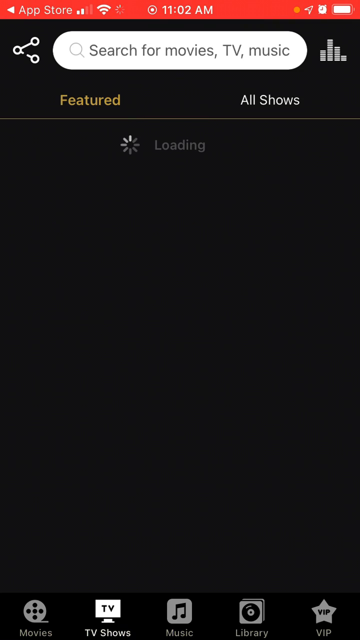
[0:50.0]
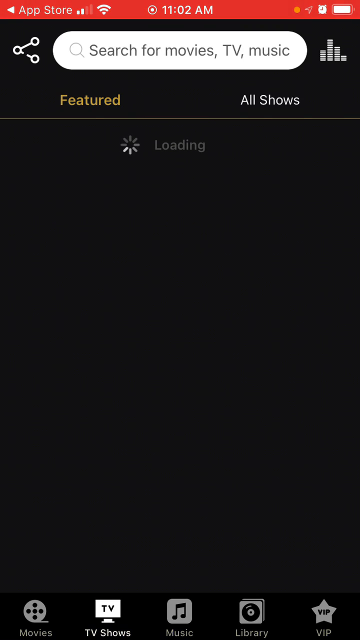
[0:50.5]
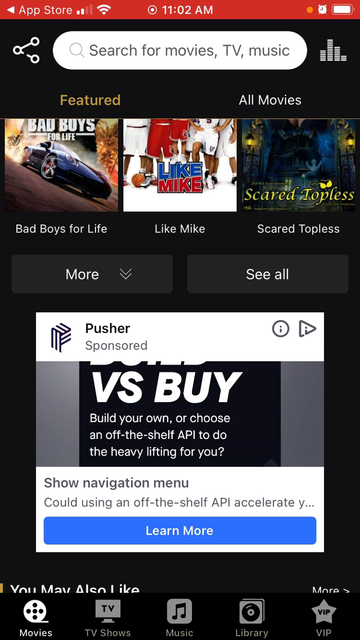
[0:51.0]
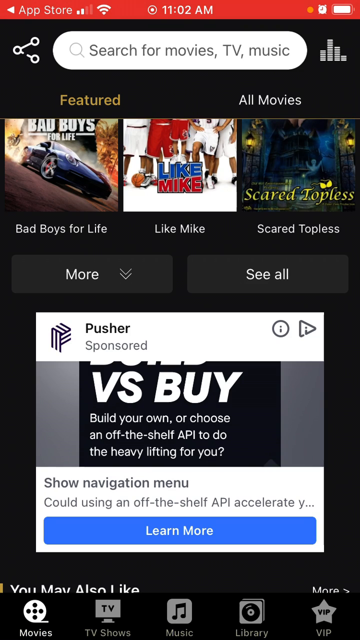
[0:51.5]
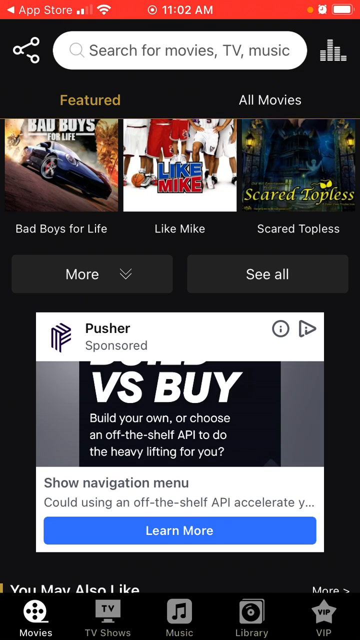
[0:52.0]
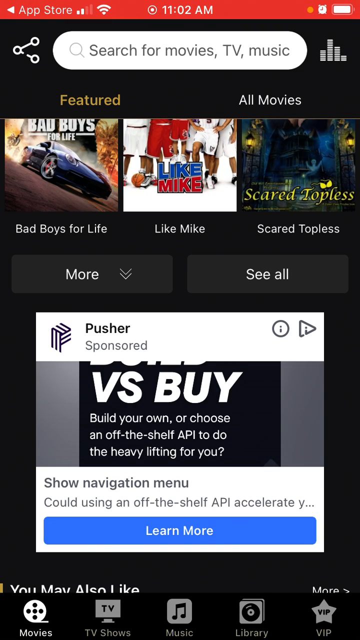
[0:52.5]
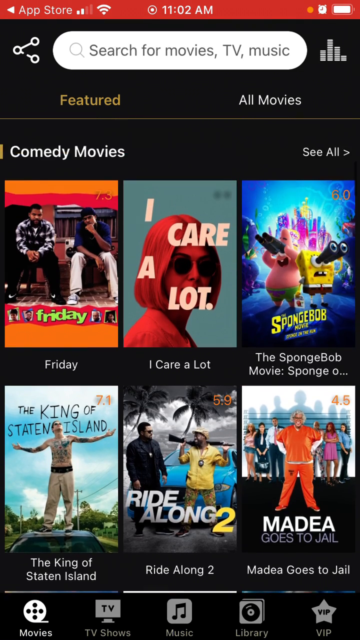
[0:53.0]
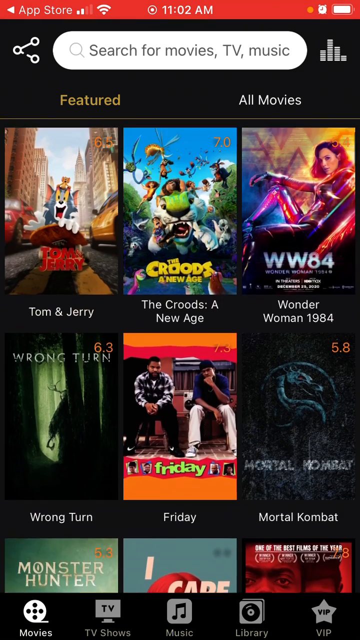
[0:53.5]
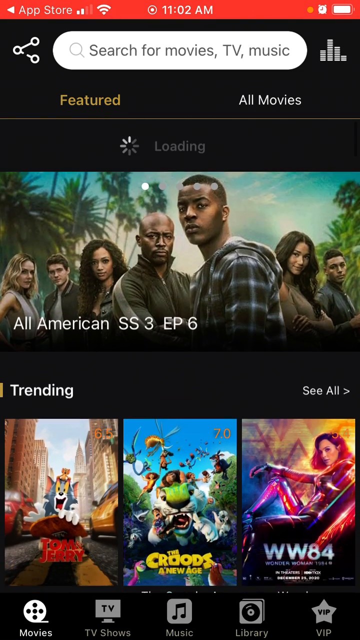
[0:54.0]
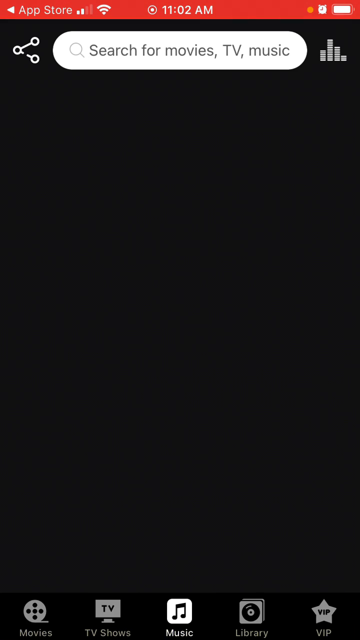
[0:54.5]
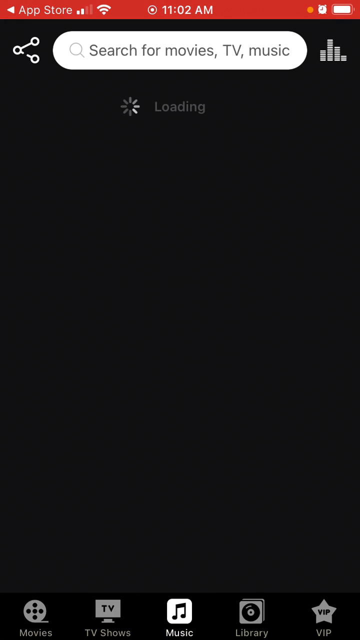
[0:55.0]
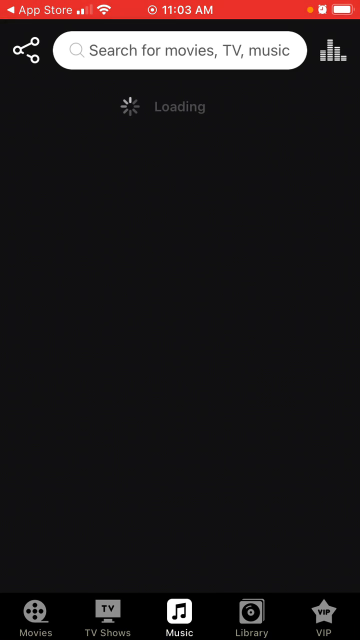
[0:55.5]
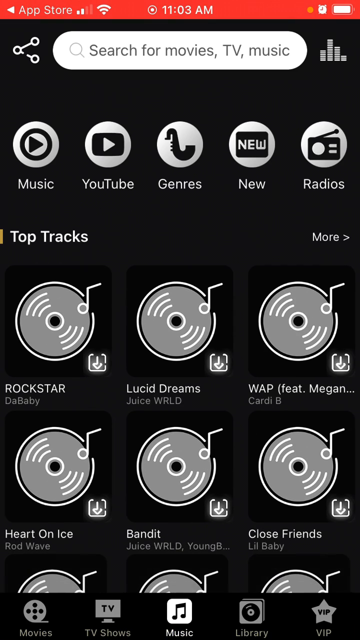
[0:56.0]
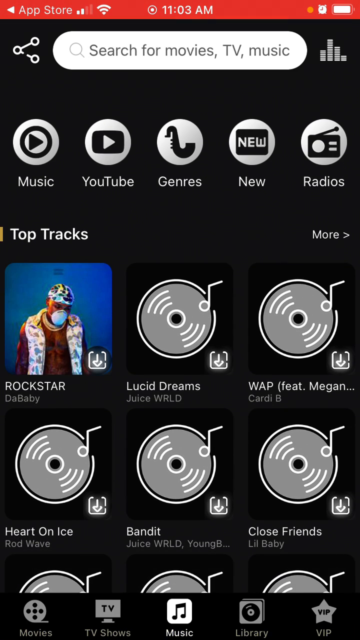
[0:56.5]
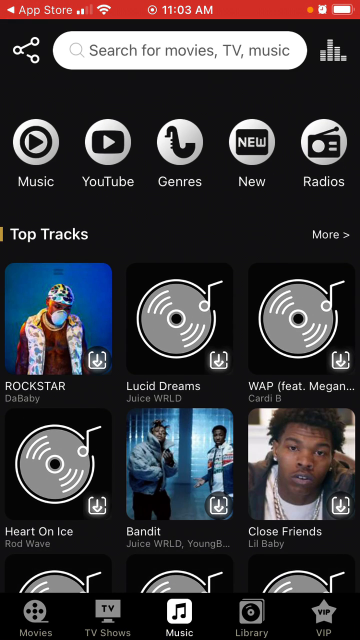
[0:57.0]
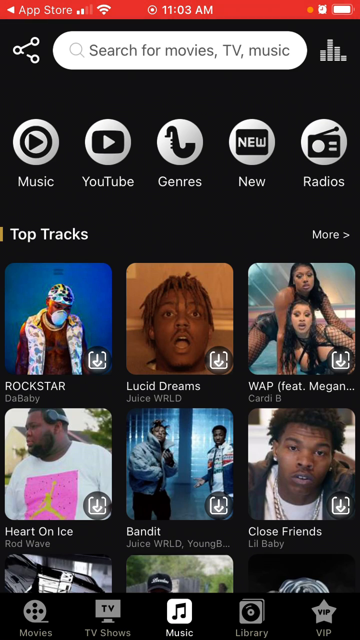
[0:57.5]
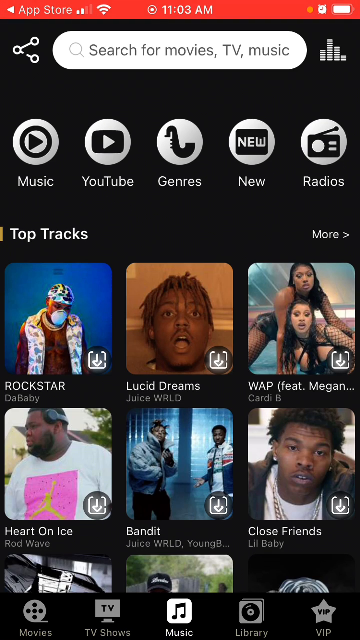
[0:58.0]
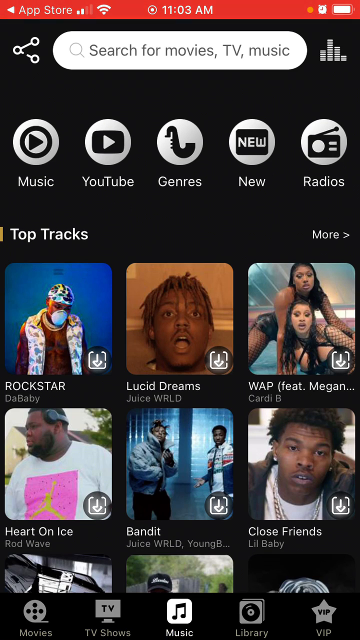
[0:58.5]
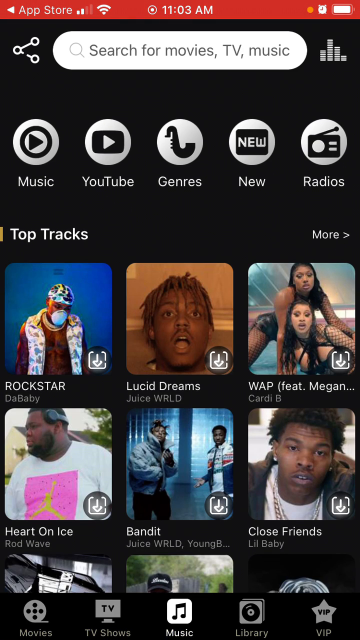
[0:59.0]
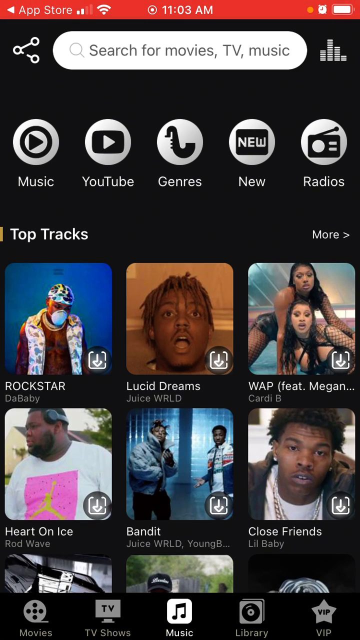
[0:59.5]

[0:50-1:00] A phone screen recording shows a mainly black page with a white search bar at the top, plus a share button and a chart button. Below them are two tabs, "featured" and "all shows." A spinning loading icon finishes, and movie covers appear: Scared Topless, Like Mike, and Bad Boys. There is a "more" button with a "see all" button next to it. An ad pops up reading "pusher sponsored," with a blue "learn more" button at the bottom. The user scrolls through more movie images and then looks at music album covers. Some show actual album art, while others are just an icon. Toward the top are buttons for Music, YouTube, Genres, New, and Radios, each with an icon. More album covers load.